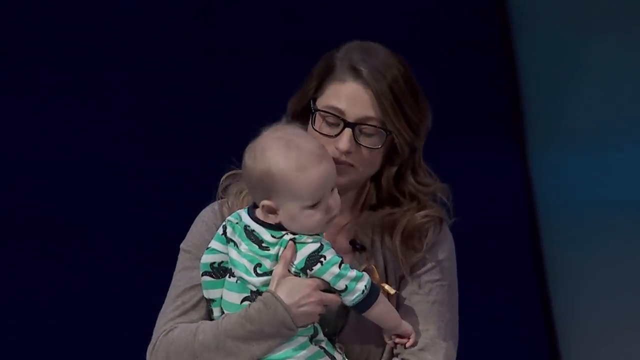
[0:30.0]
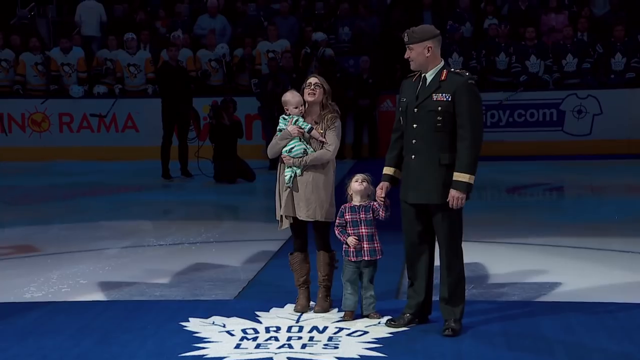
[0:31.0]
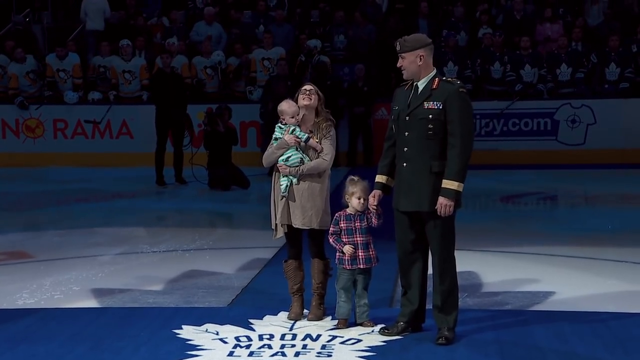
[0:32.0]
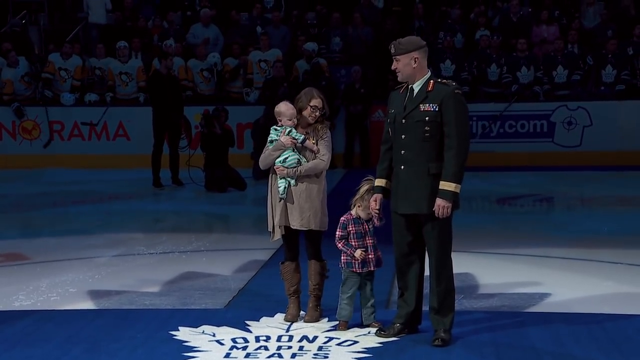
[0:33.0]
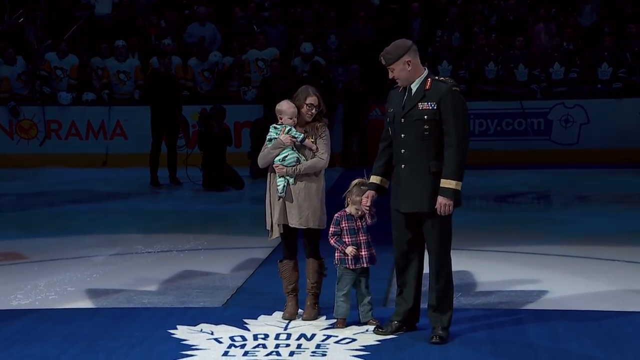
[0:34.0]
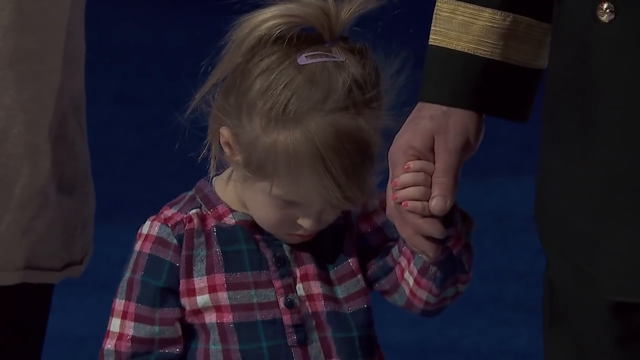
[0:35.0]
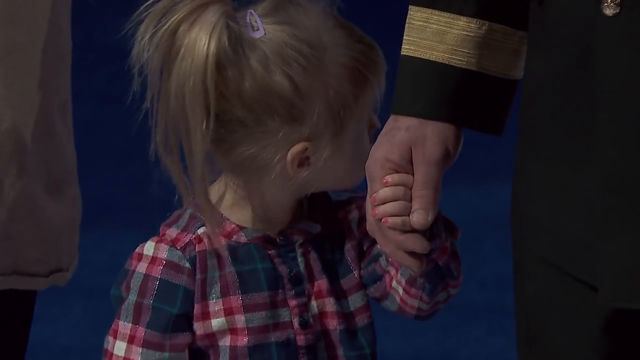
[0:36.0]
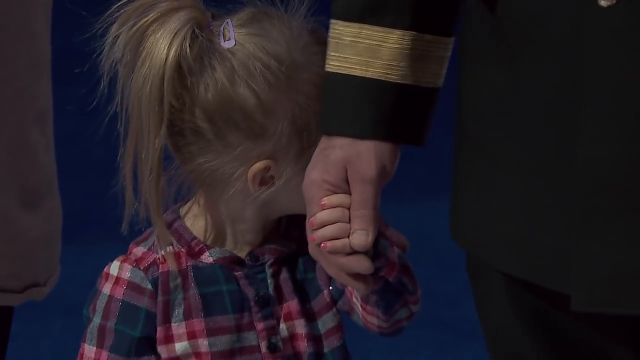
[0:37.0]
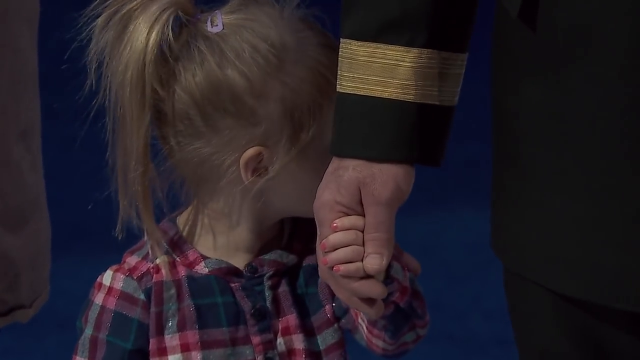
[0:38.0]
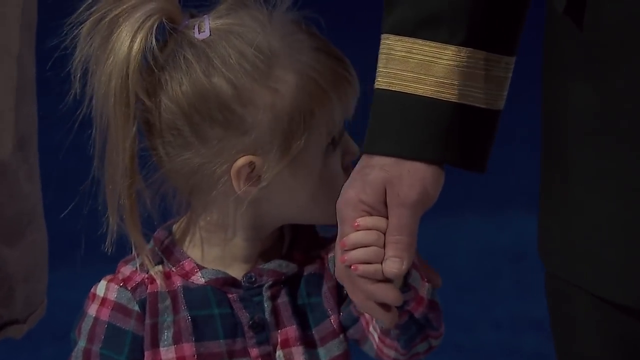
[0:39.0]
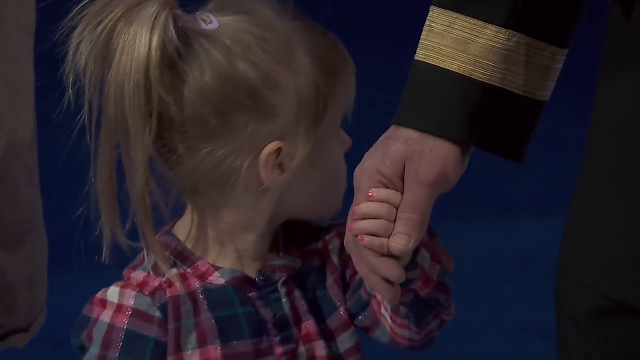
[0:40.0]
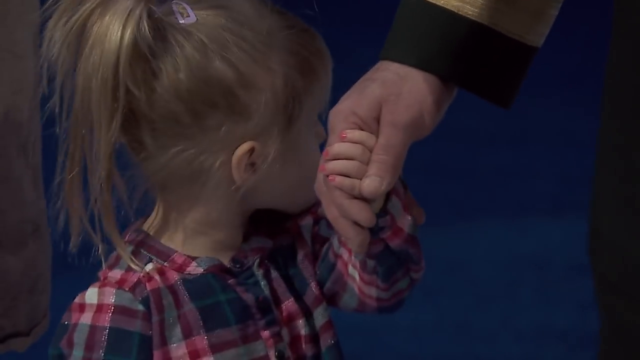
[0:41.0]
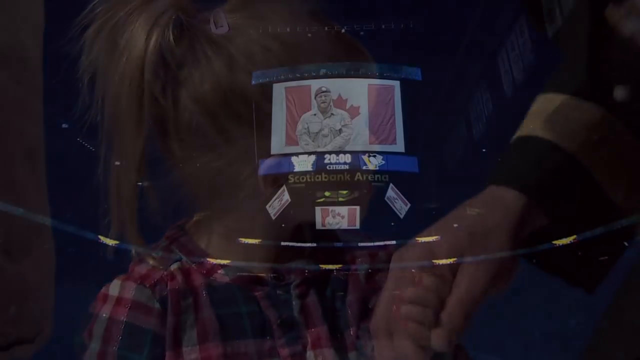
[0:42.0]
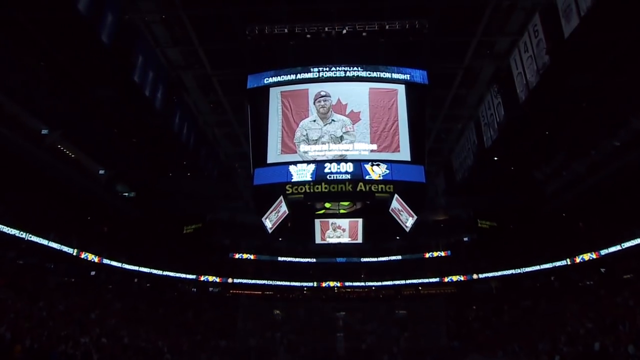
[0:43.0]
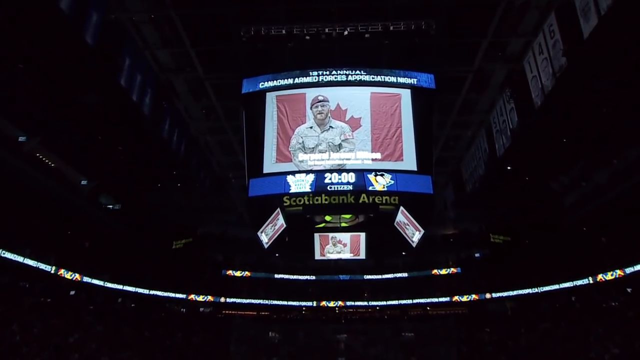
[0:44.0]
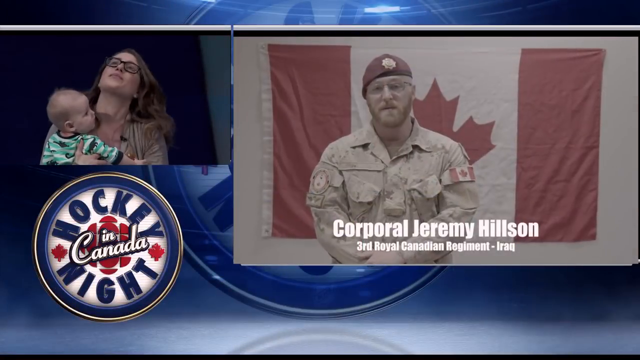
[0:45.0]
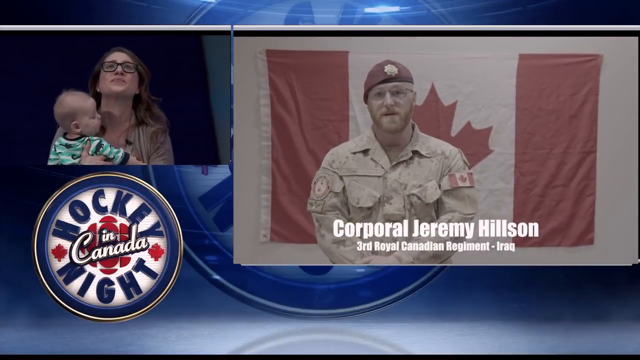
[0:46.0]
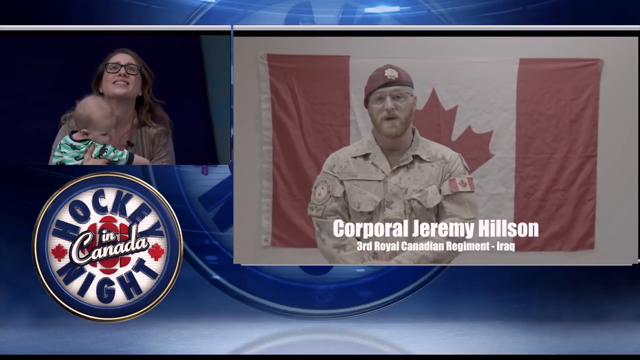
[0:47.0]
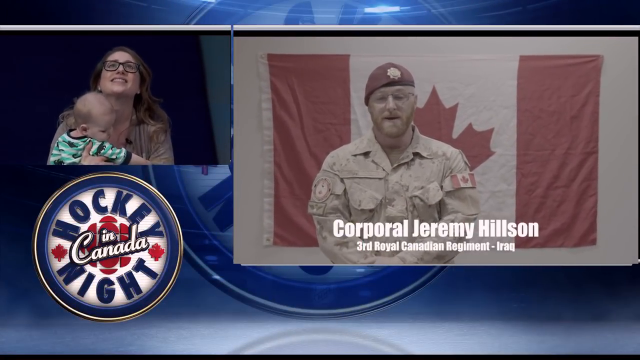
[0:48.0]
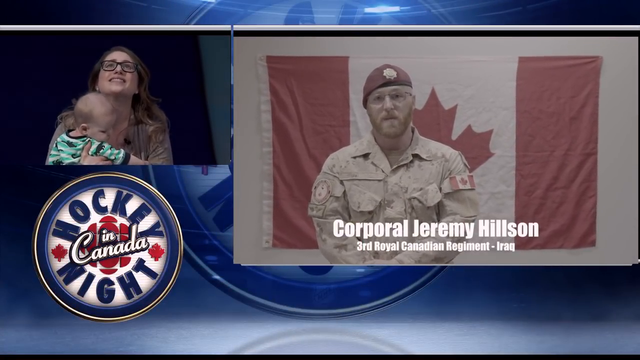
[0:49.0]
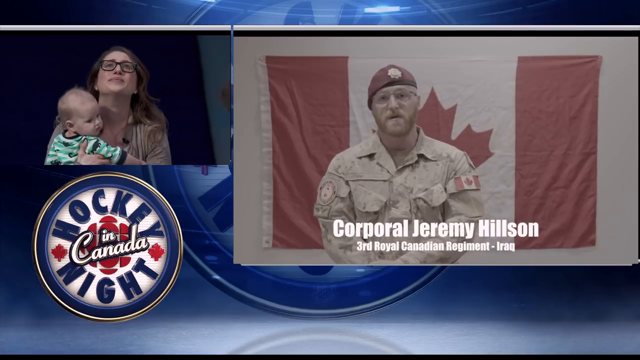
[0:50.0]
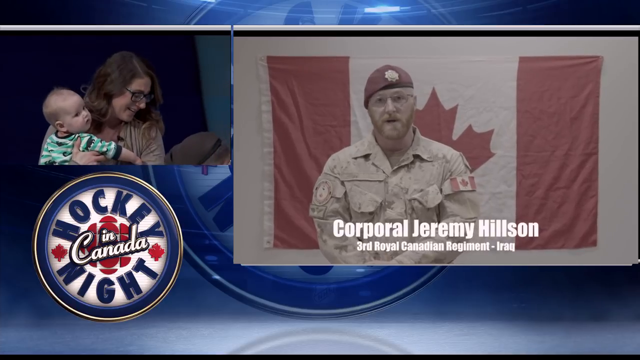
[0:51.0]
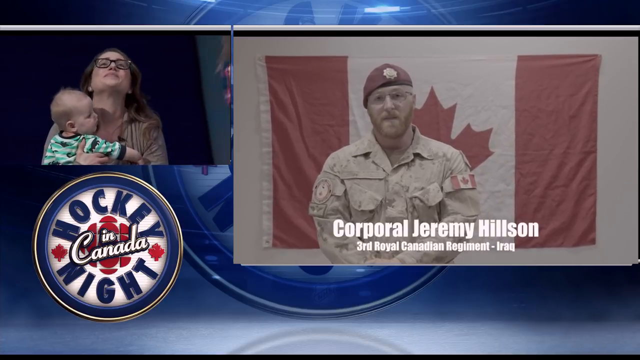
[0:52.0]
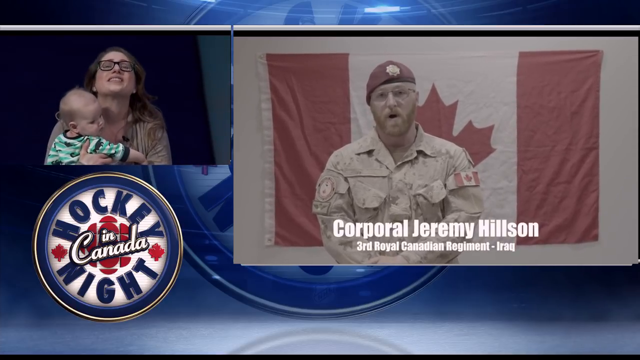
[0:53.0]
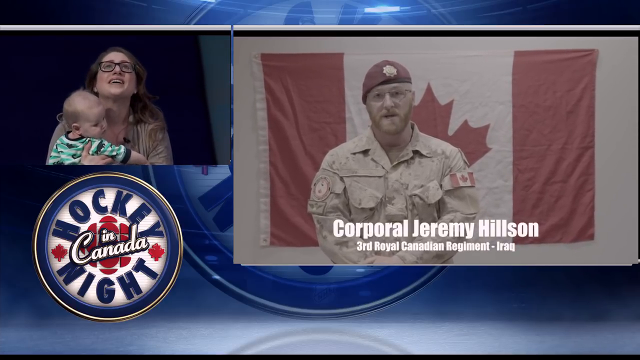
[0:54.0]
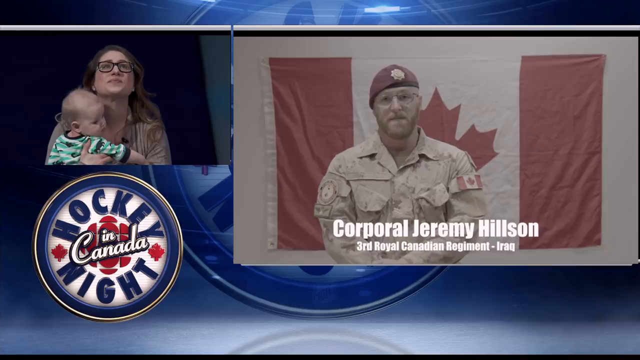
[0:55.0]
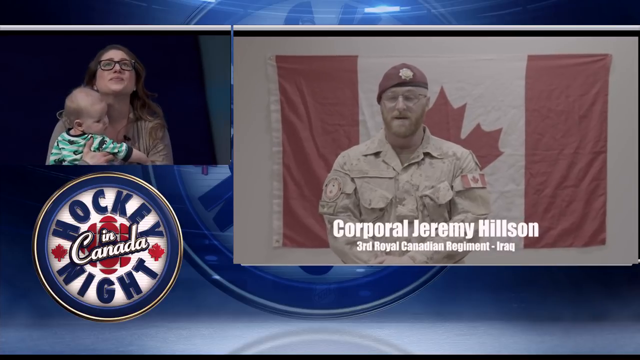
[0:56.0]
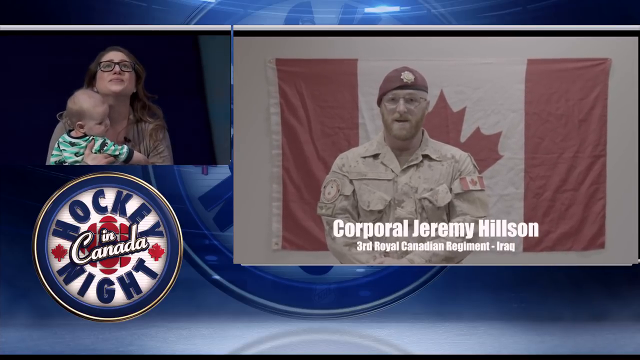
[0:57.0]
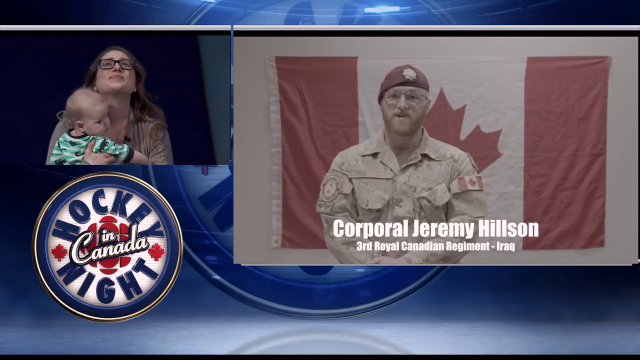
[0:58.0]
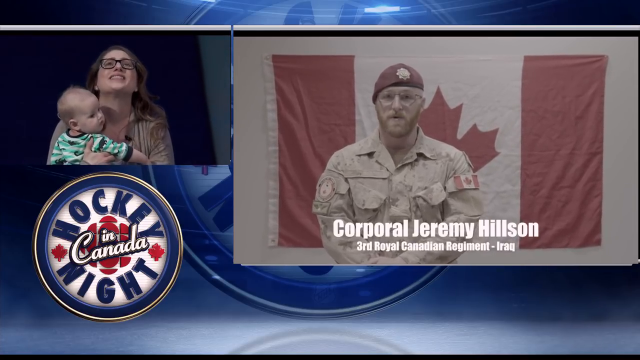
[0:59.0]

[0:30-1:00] He wears a green and white horizontally striped shirt with black around the collar and sleeves; he is a little balding, with little hair on top and some at the back, and has chubby cheeks. The mom looks down at him. She is probably in her early to mid-20s, with long, somewhat curly hair and black-framed oval glasses. She looks down and then smiles. In a zoomed shot she looks at the teleprompter showing her husband. The baby is not looking up, only into the distance. The man to the right is very tall, about two feet taller than her. They stand in the middle of the rug, which runs out behind them vertically and then horizontally in front. A large mat says "Toronto Maple Leafs" with a white maple leaf logo. The teleprompter is shown in a side-by-side shot, with a smaller thumbnail video of her looking up at her husband to the right; he speaks to her and she listens. At the bottom, where she is, text reads "hockey night" and "in Canada" in a white script with a blue circle around it. She looks down for a second, smiling. The baby gazes out in front of her without looking anywhere else.